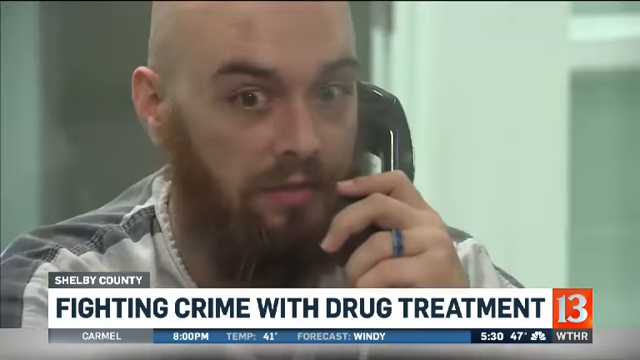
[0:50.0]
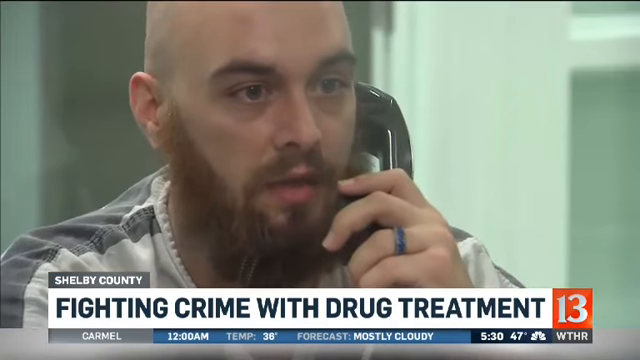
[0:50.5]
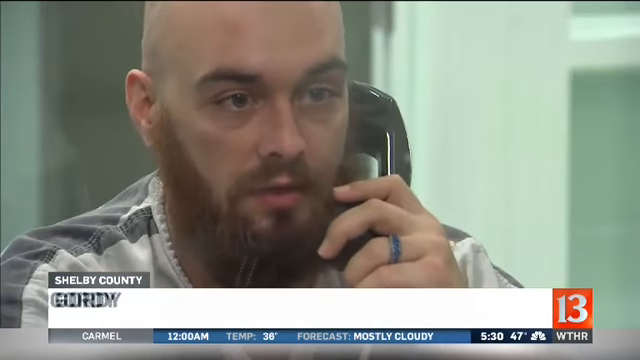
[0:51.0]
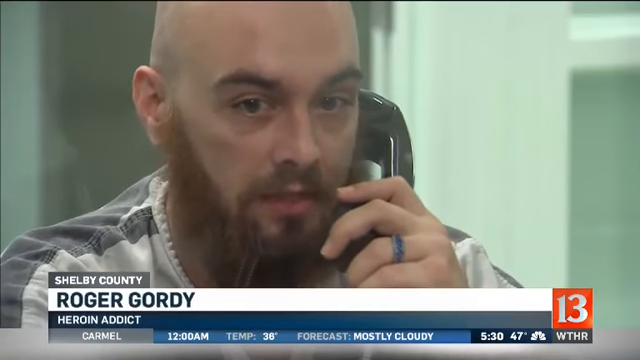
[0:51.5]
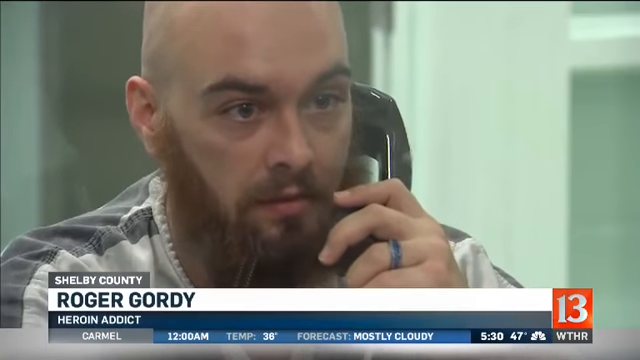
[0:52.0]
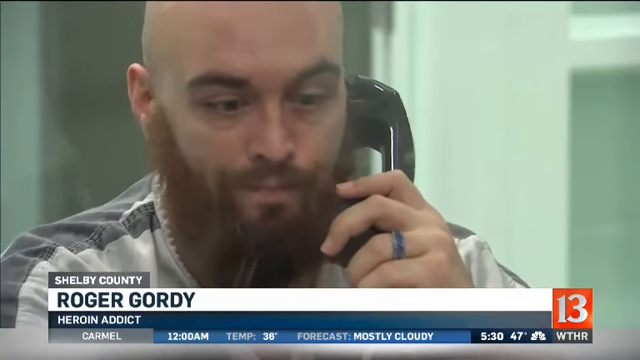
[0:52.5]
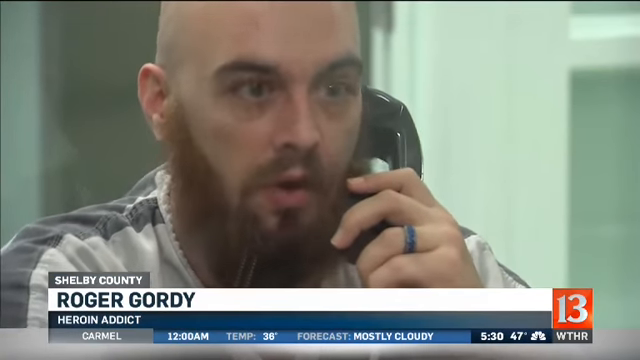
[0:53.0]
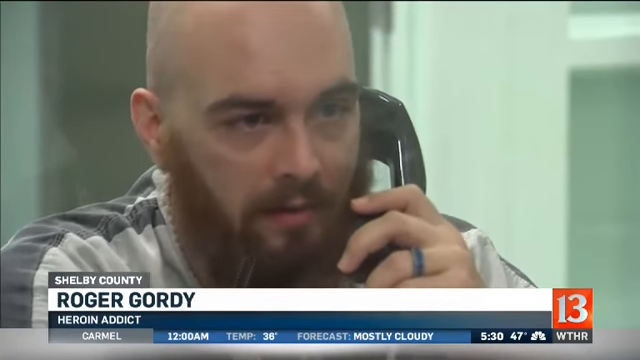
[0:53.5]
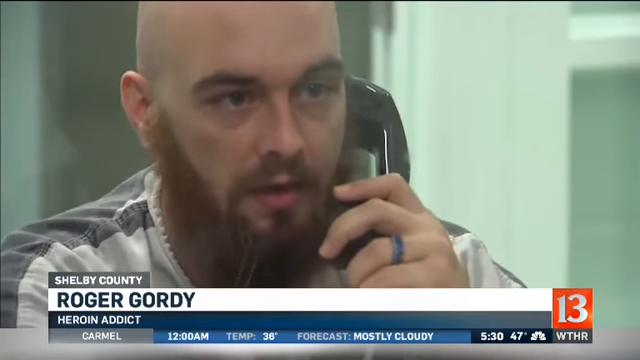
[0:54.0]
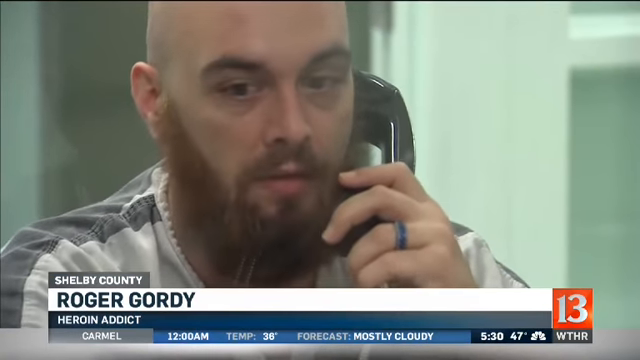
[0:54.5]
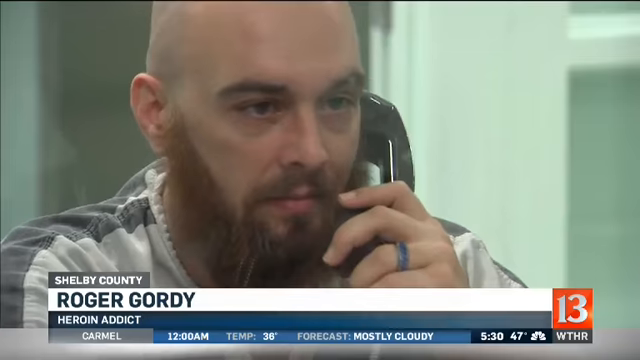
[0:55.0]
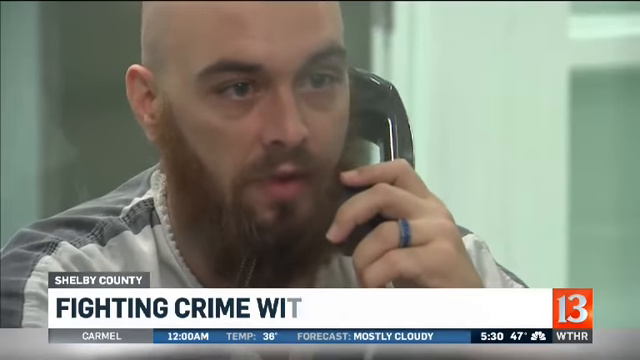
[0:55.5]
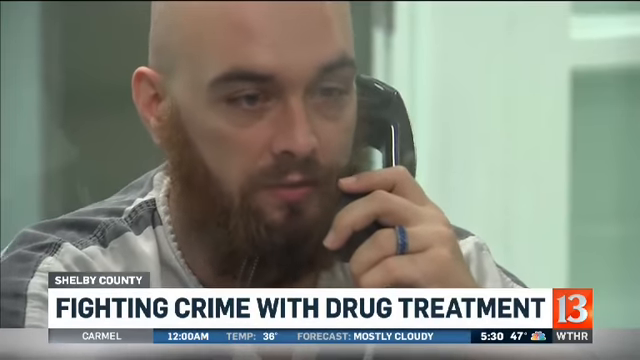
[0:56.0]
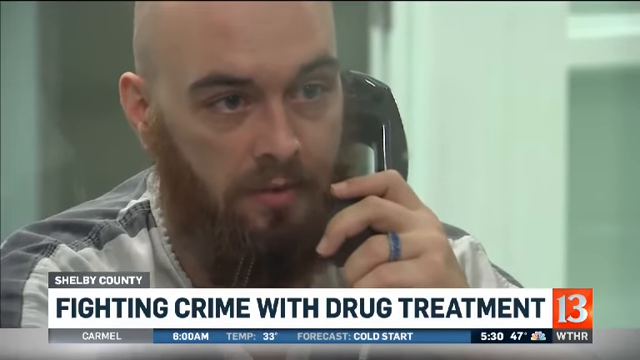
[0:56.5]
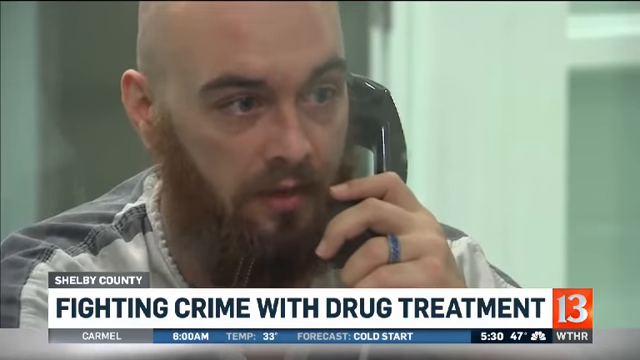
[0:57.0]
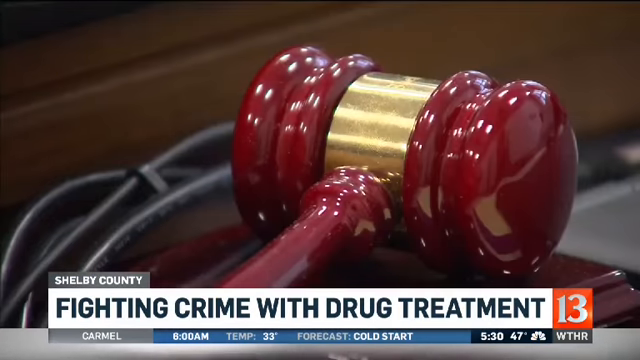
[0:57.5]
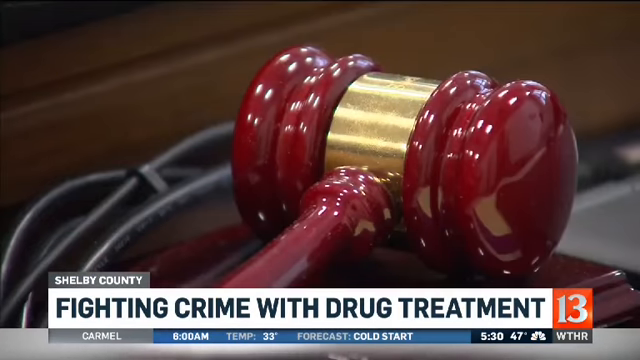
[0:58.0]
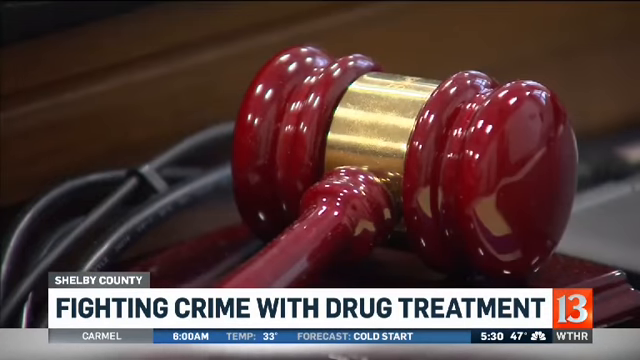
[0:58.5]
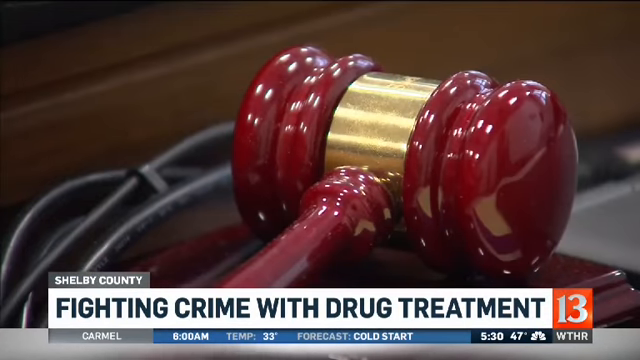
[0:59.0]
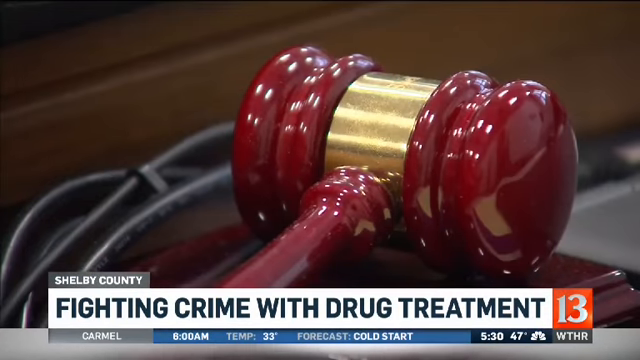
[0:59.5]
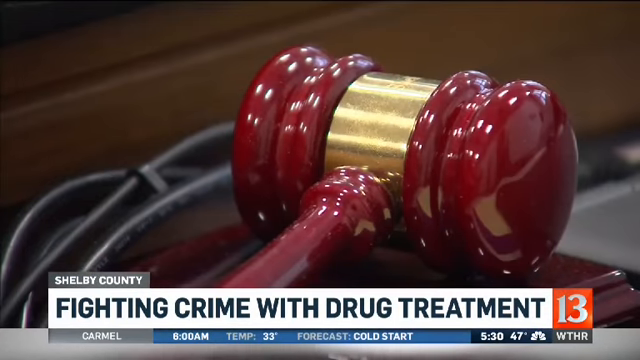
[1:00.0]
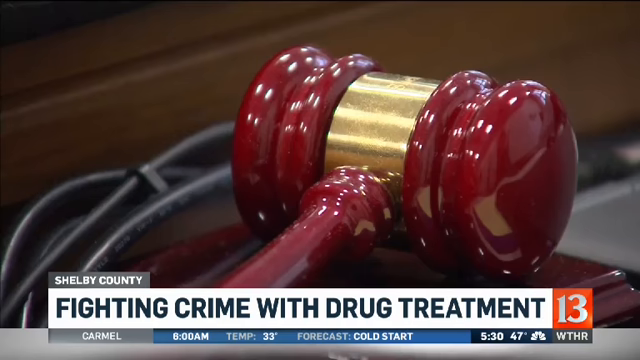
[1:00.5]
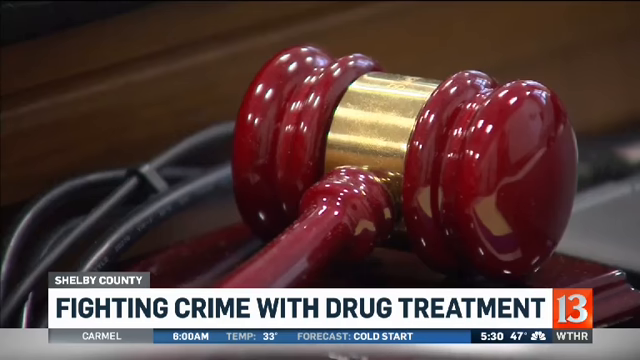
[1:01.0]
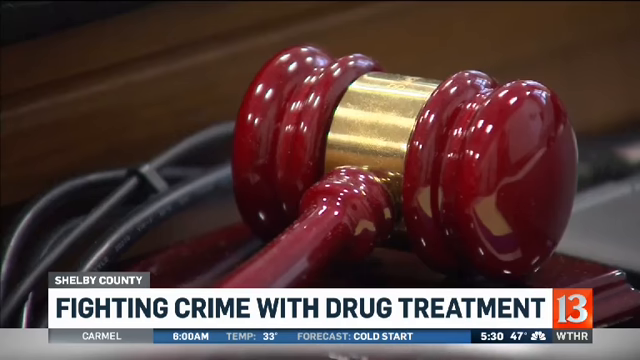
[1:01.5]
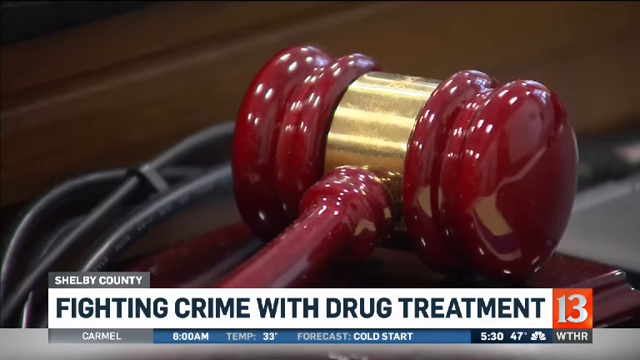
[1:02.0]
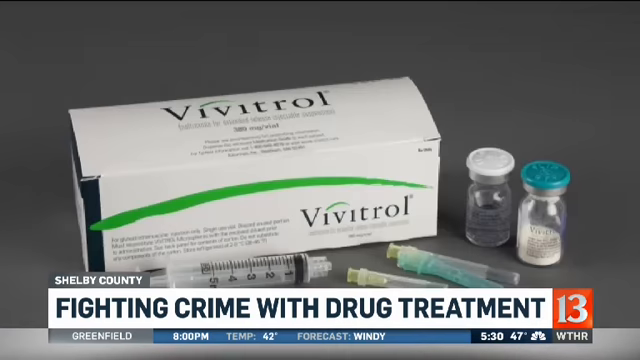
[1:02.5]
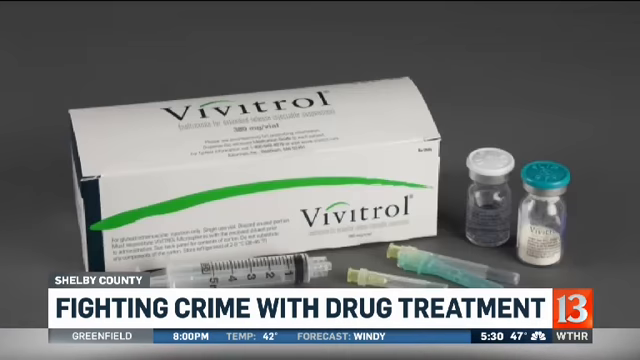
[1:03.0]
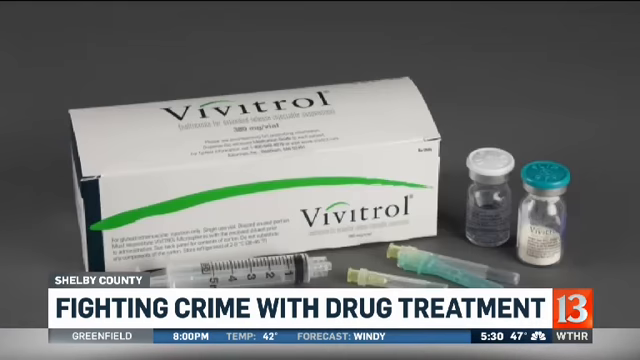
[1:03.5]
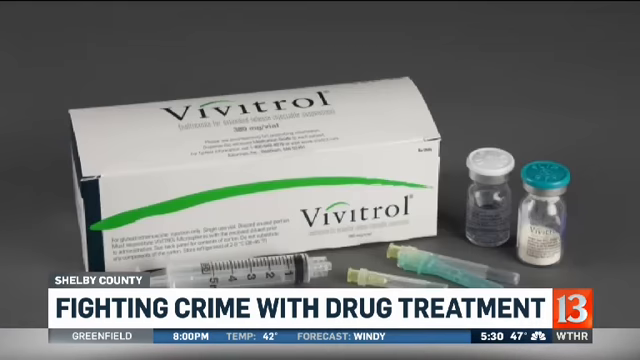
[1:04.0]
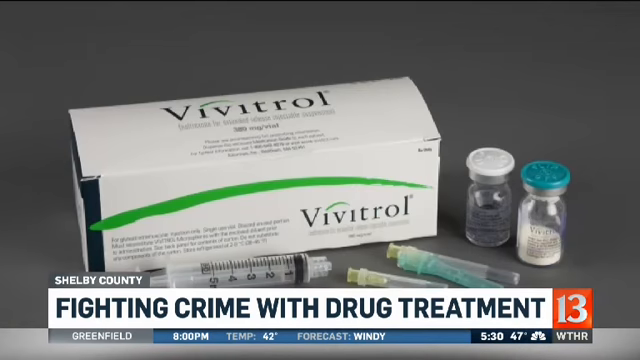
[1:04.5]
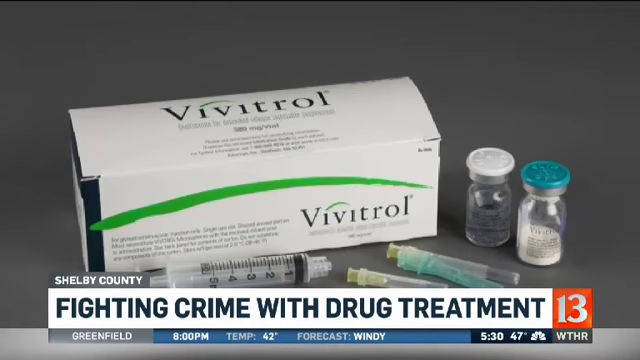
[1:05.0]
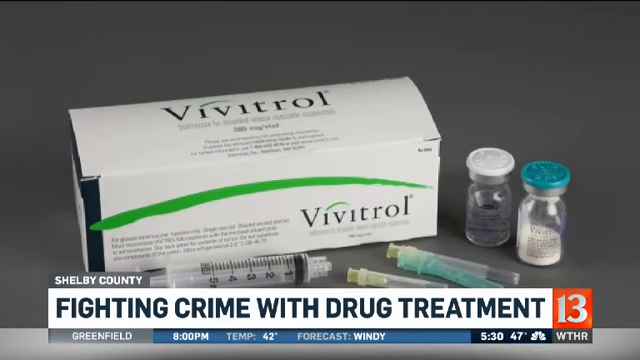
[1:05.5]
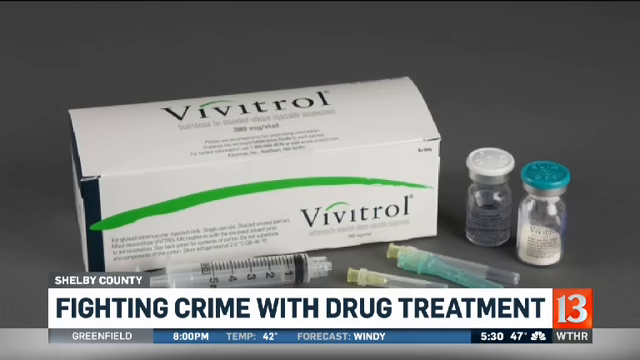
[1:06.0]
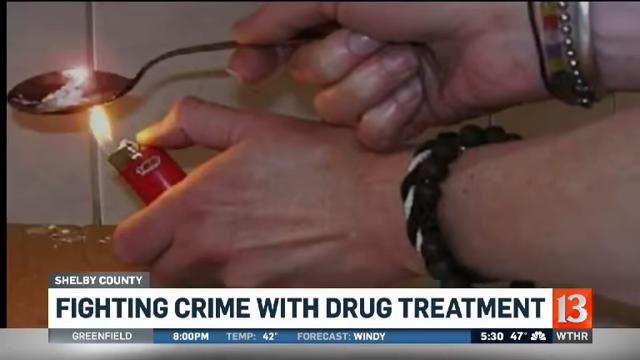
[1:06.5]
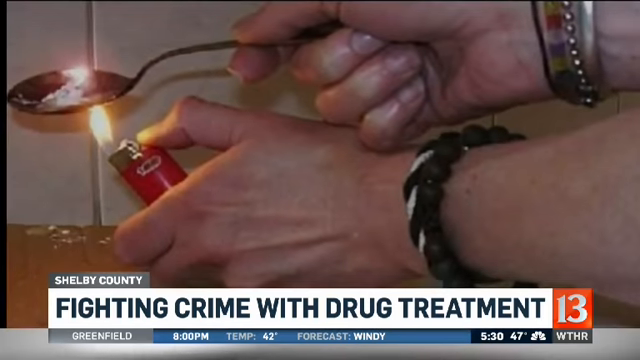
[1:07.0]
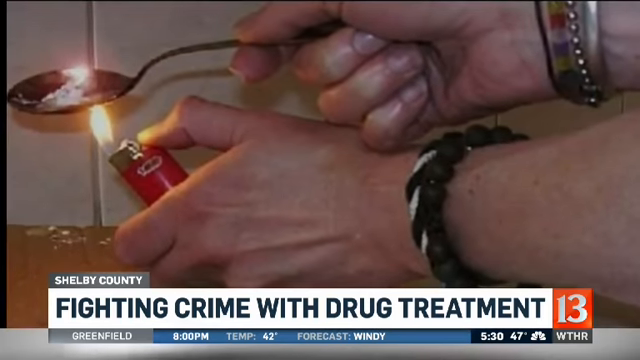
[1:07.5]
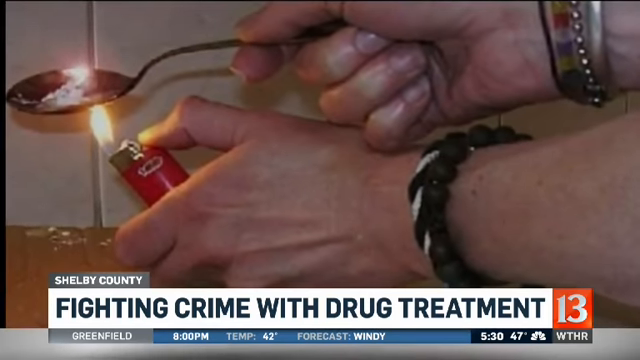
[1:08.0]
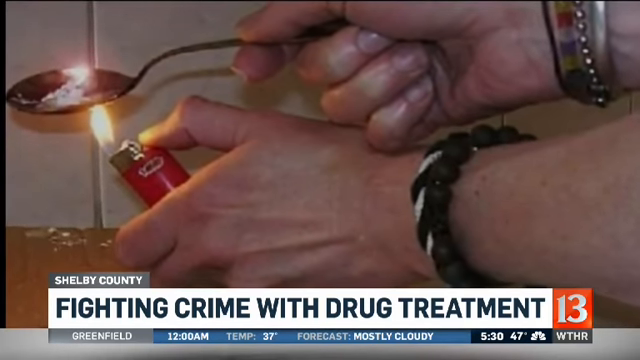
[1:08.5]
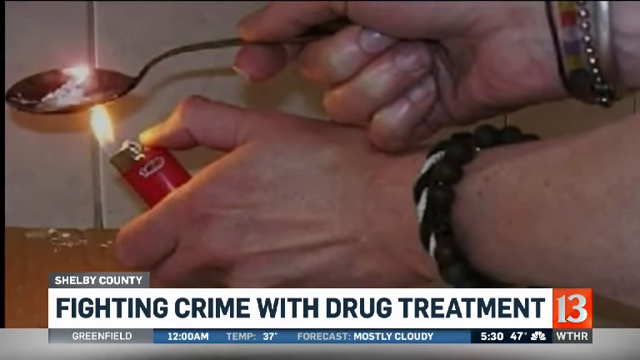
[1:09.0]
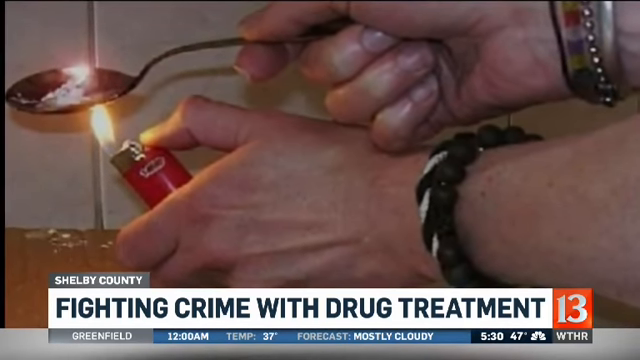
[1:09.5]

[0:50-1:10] The prisoner is on what looks like an interview visitation with the man who interviewed Brad, in what looks like an office at the Shelby County Criminal Justice Center. A close-up of the man's face shows his full beard, and a blue ring is visible on a finger of his left hand. As he continues the call, his name is shown as Roger Gordy, a heroin addict. Across from him is a red judge's hammer with a gold strip. On the left side are black cables. Medication called Biotrol is then shown, with the branding on the box, and in front of it what looks like syringes, with medication in the back, on a grey backdrop. A person then holds what looks like heroin with a gun lighter.